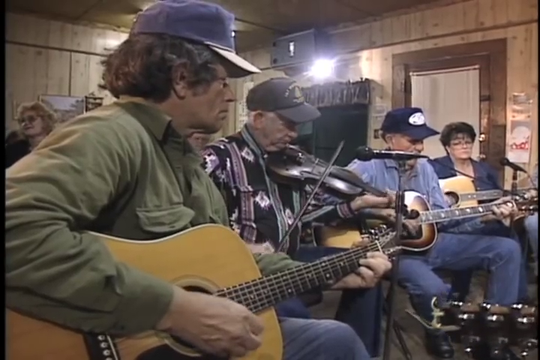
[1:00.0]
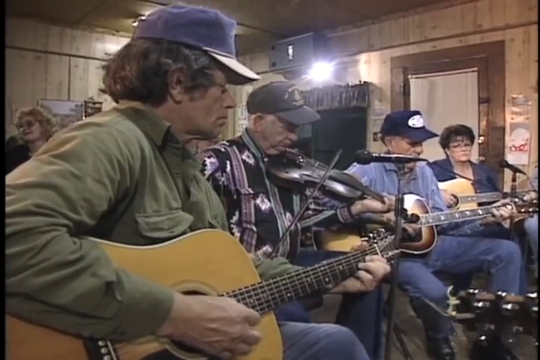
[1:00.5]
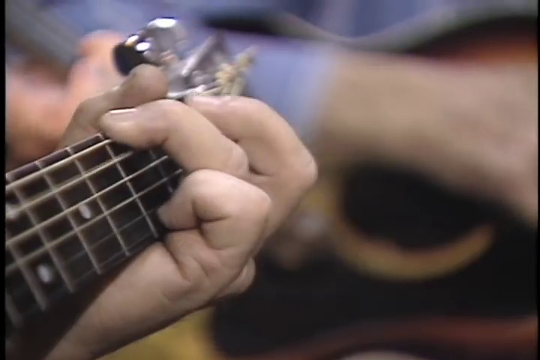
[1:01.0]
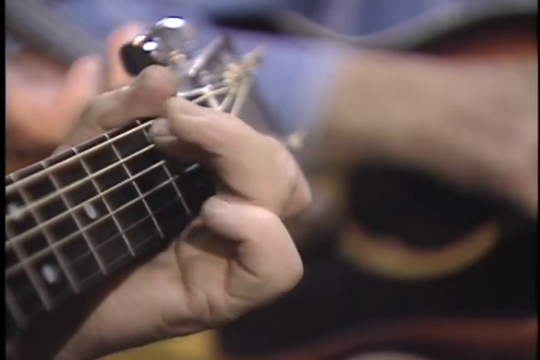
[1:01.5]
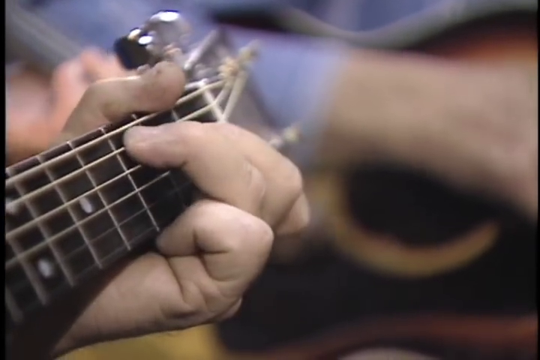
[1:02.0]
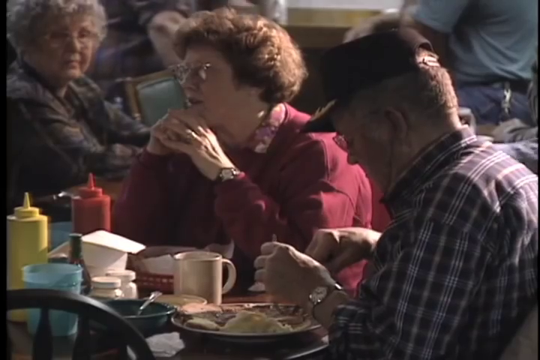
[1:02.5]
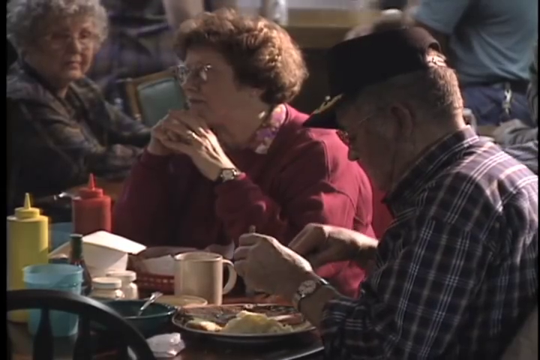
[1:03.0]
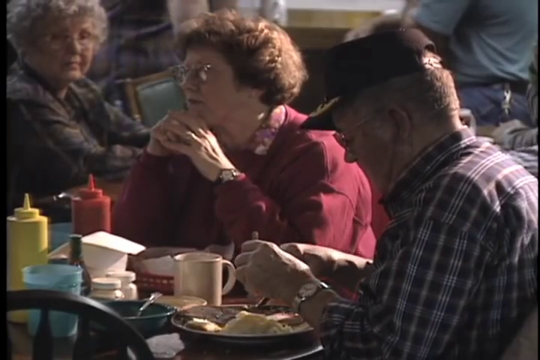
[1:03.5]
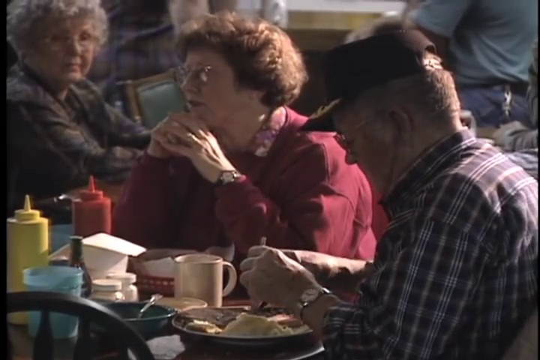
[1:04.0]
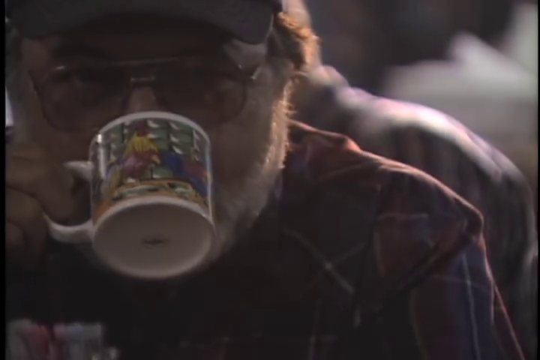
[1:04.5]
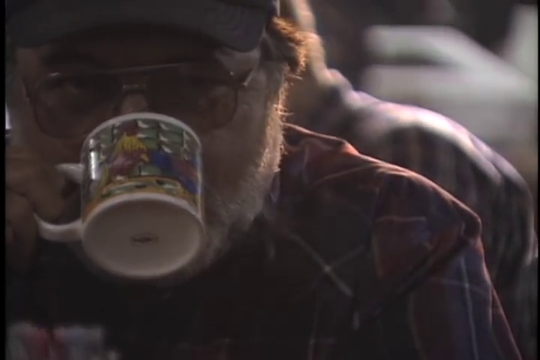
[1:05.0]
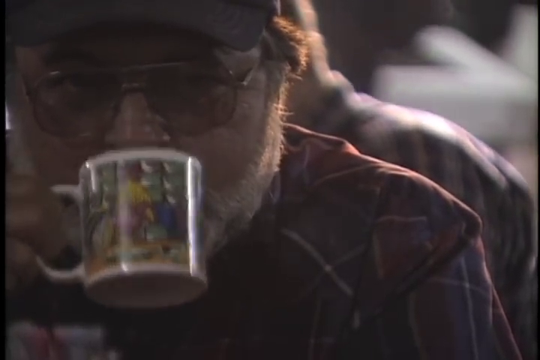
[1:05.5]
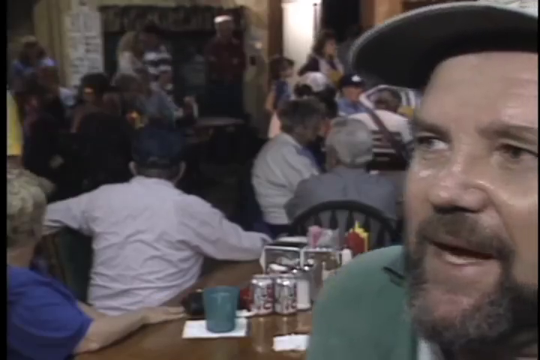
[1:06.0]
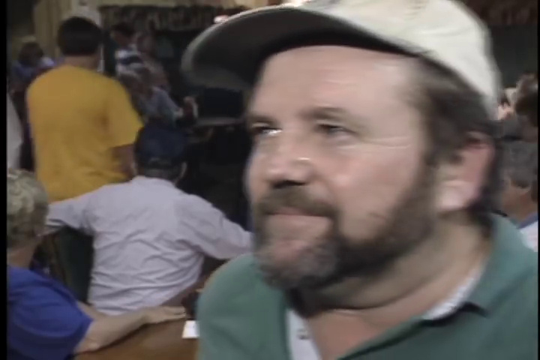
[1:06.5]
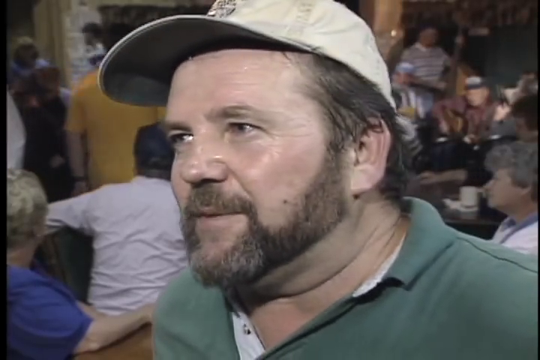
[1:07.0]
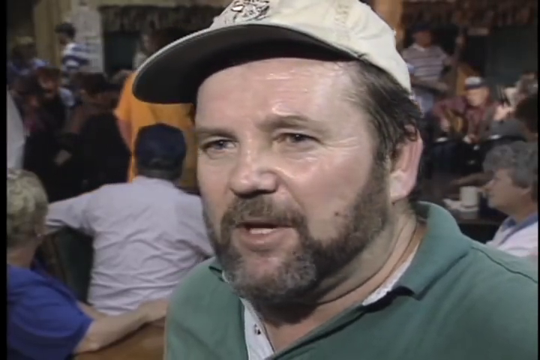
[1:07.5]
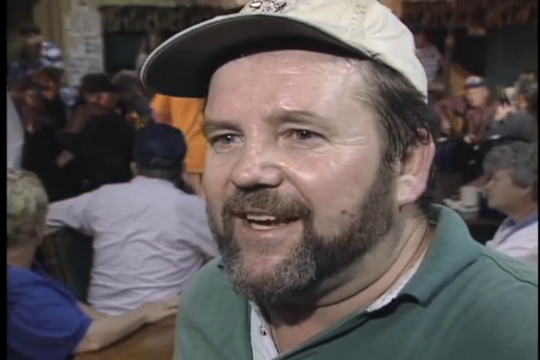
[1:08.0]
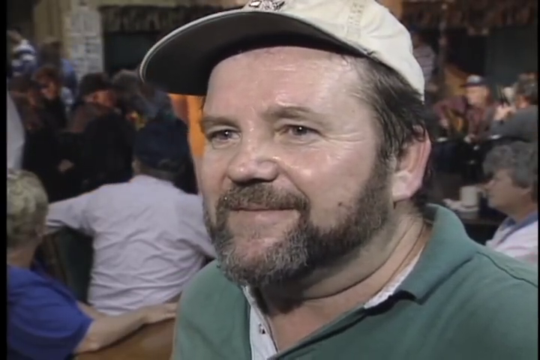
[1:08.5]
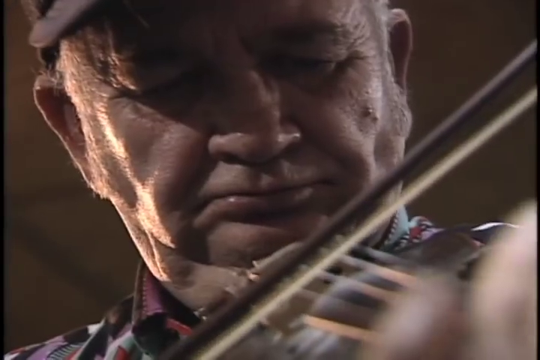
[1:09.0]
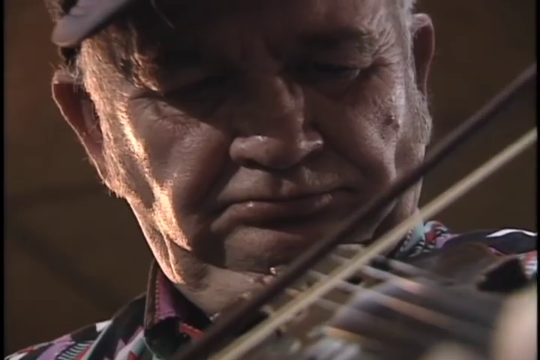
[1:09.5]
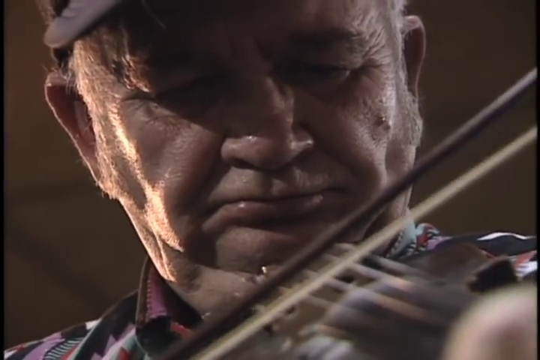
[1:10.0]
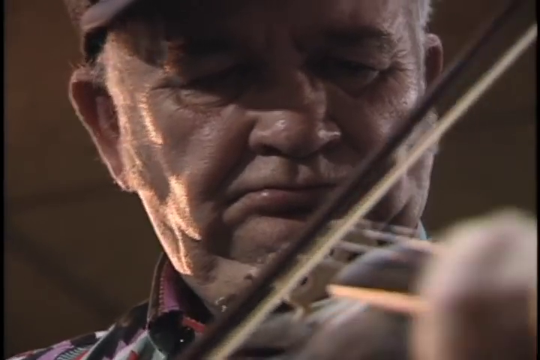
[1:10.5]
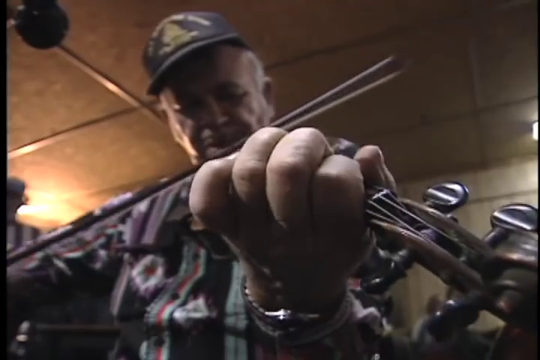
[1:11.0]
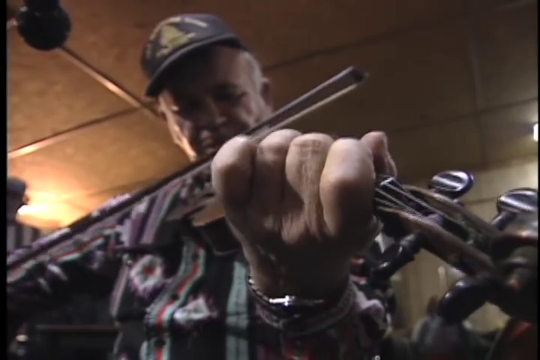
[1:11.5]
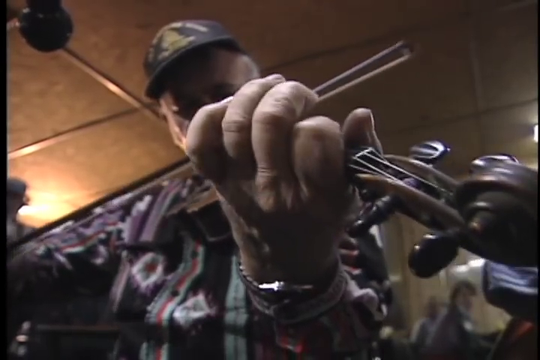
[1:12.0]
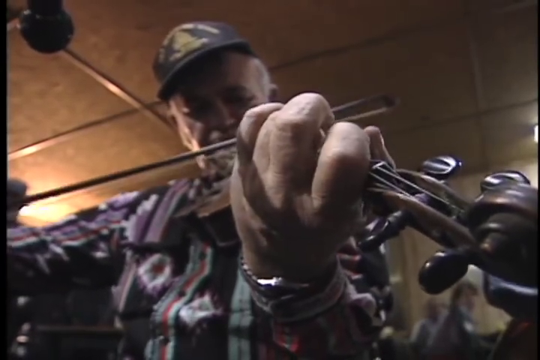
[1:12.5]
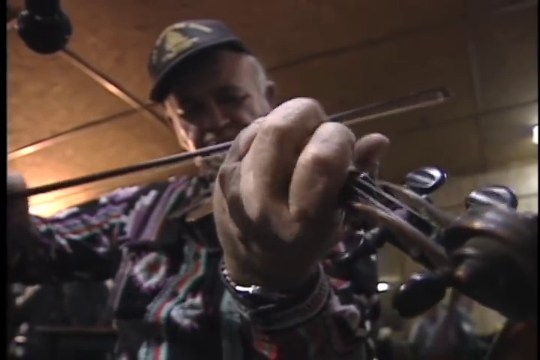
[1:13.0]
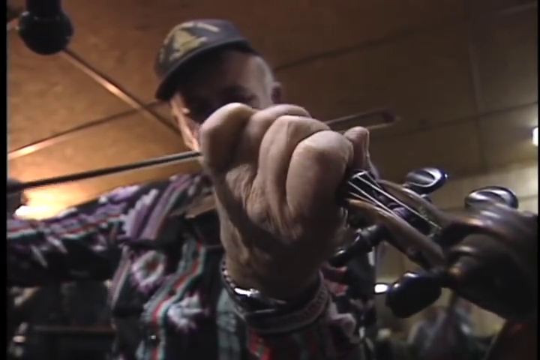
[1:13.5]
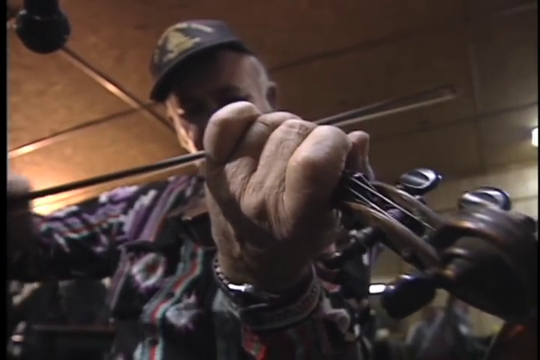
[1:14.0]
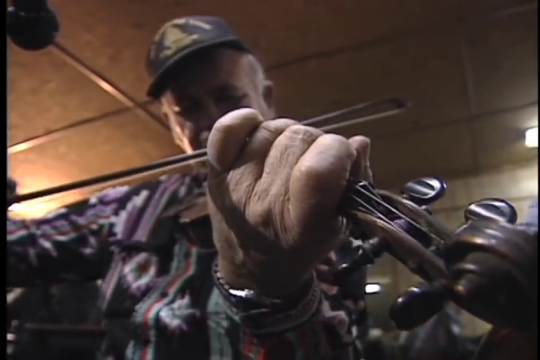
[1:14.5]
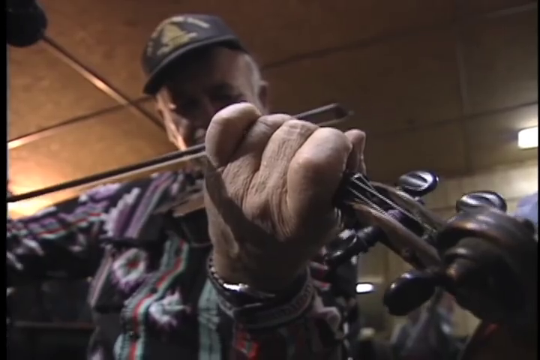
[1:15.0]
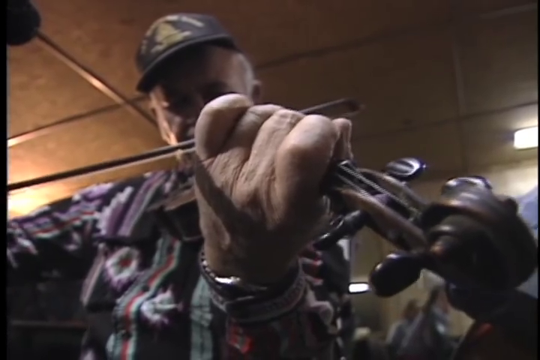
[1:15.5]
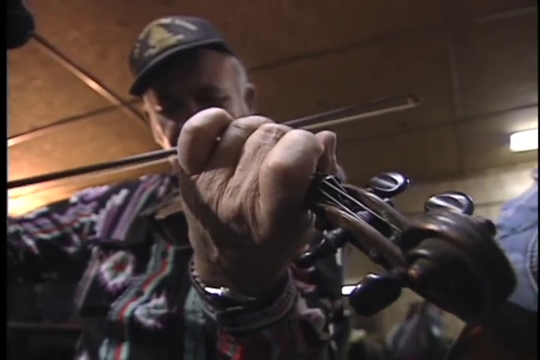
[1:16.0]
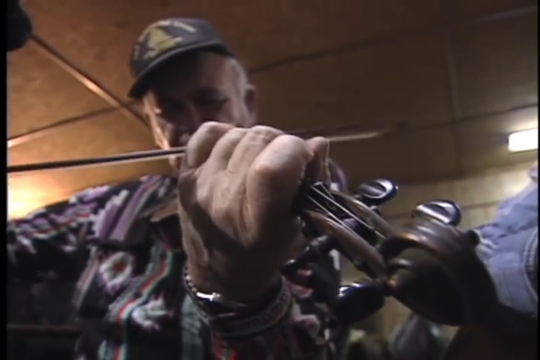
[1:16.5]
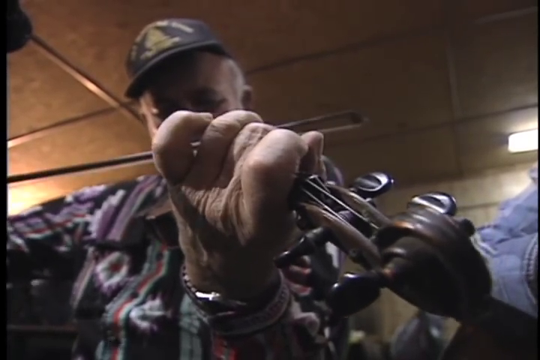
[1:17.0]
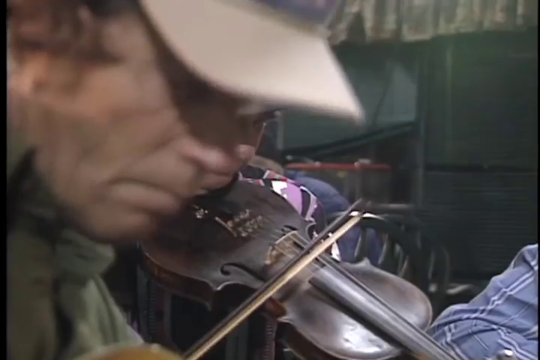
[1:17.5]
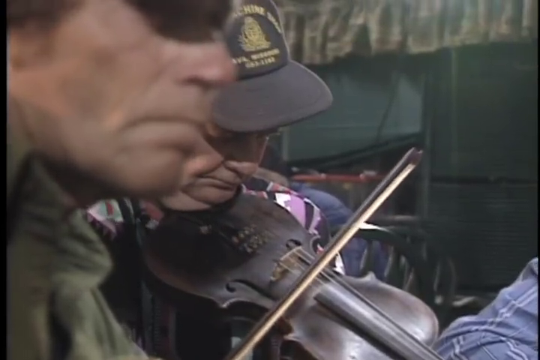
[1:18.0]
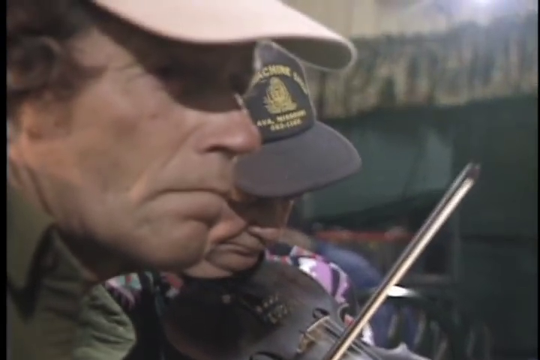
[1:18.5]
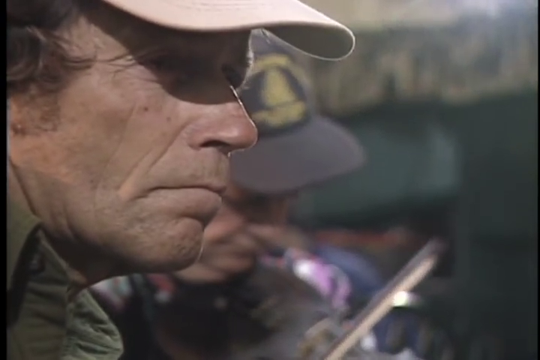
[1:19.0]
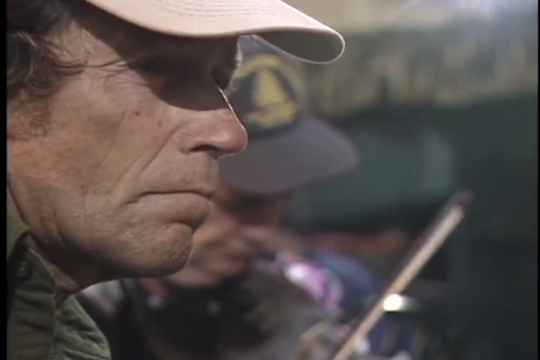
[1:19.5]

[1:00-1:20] In the left foreground a man in a light green jacket, with dark hair around shoulder length, maybe a little above, and a blue peaked cap, plays a guitar, plucking with his right hand while the fingers of his left hand curl over onto the frets. The line of players extends to about the middle of the right side of the frame. Next to him an older man, also in a peaked cap, plays a dark-coloured violin, his left arm holding the arm of the violin while his right hand holds and draws the bow. Next to him is another older man in a similar dark baseball cap with some sort of white logo on the front, wearing a light blue shirt and jeans. At the end of the row a dark-haired woman in a blue shirt plays a guitar that is largely obscured behind the man next to her; she may be a woman seen before. The shot moves to a table where a man is eating, then to somebody drinking. Then a bearded white man in a light-coloured peaked cap appears centrally in the foreground; the peak appears dark on the underside, whether from its colour or shadow. He wears a green polo shirt, with the collar on his left-hand side slightly turned under at the edges. In the background other people wander about the premises. Next, a man is central and close to the camera with his violin tucked under his chin, so his head is bowed slightly forward. Only a little of the peak of his cap is visible on the right-hand side, with his ear just below. He is getting on in years and slightly wrinkly around the eyes, and he draws the bow forward and back. A more zoomed-out shot then shows more of his left hand playing the violin.